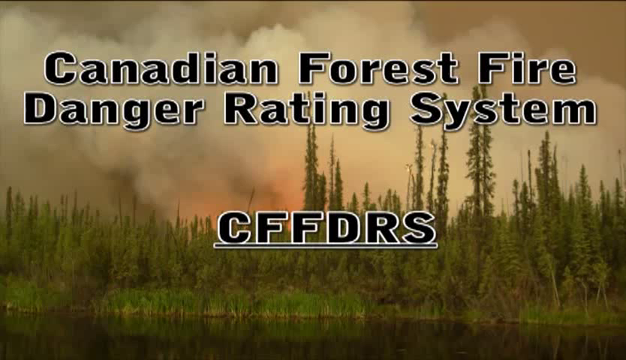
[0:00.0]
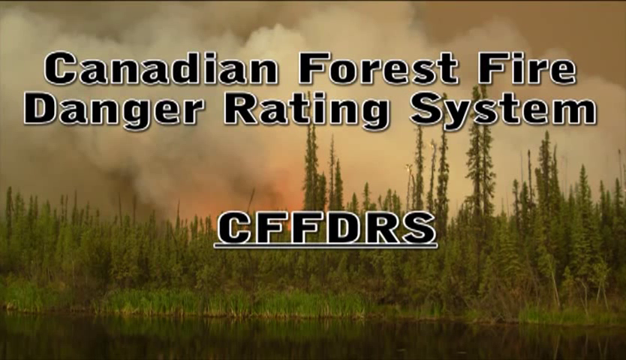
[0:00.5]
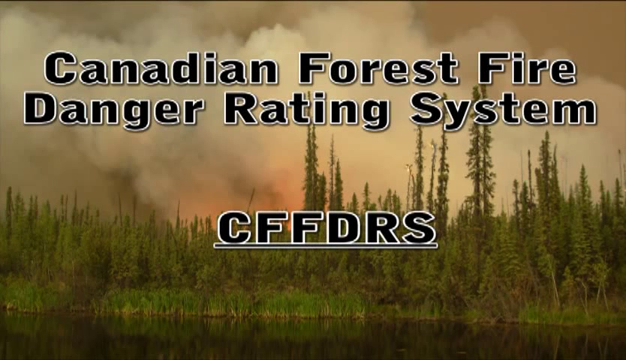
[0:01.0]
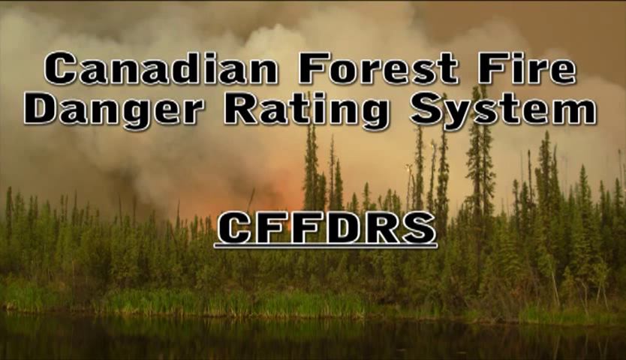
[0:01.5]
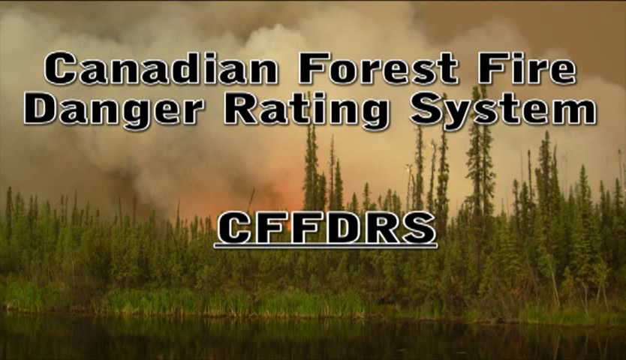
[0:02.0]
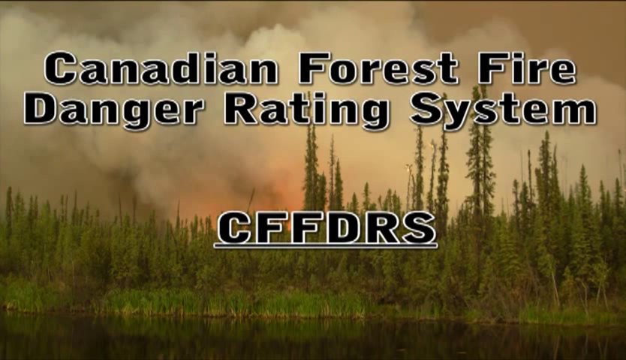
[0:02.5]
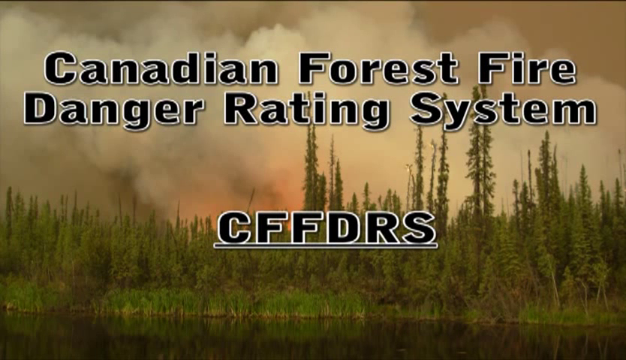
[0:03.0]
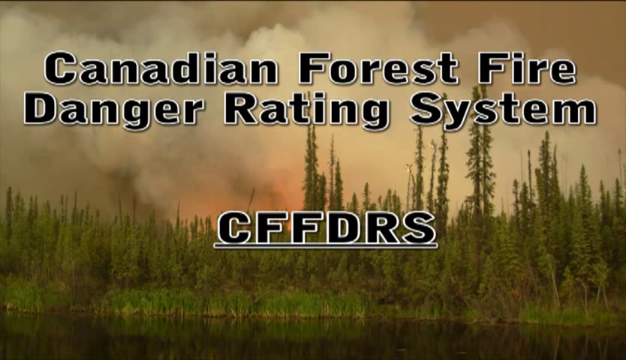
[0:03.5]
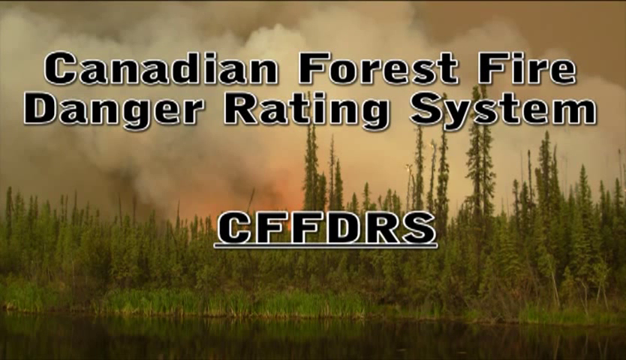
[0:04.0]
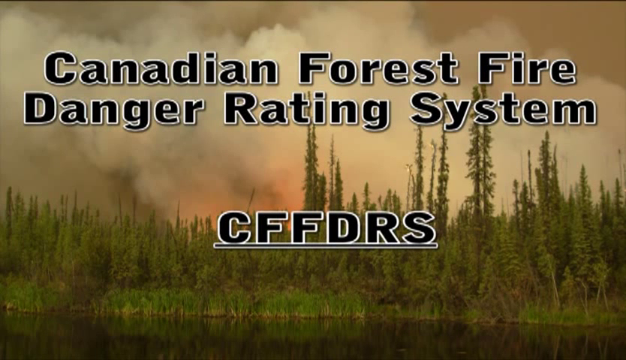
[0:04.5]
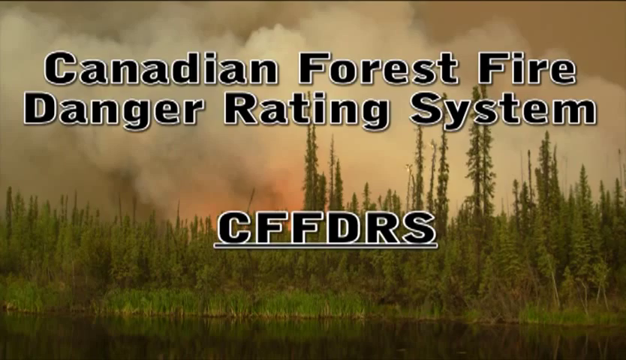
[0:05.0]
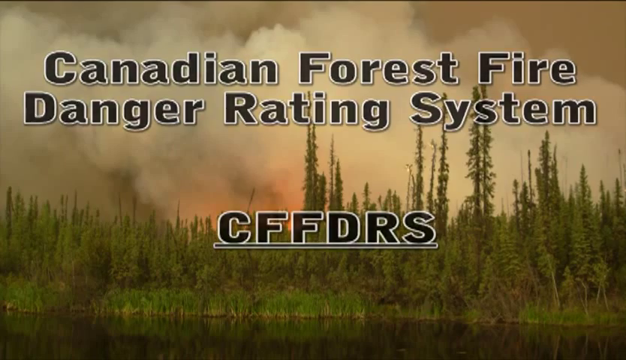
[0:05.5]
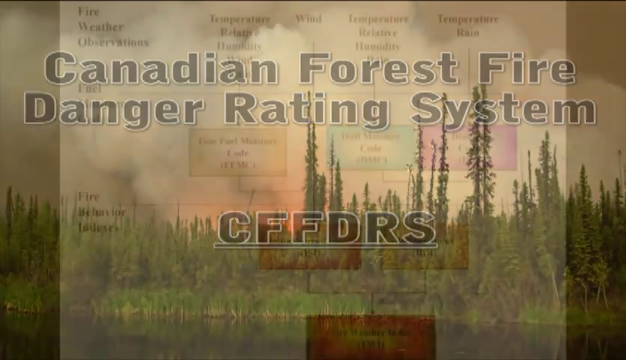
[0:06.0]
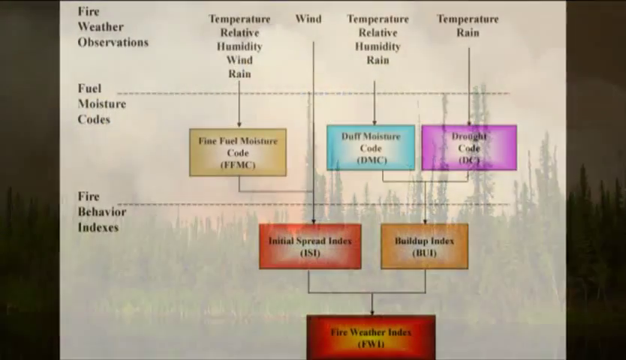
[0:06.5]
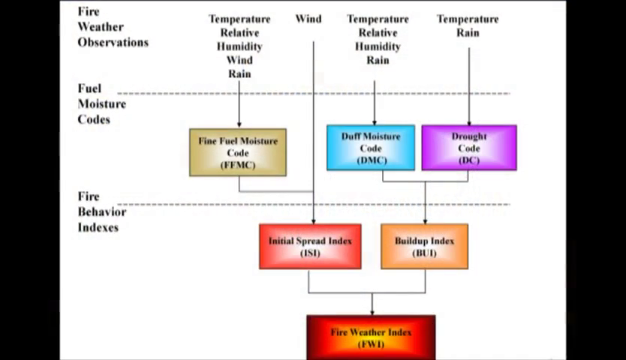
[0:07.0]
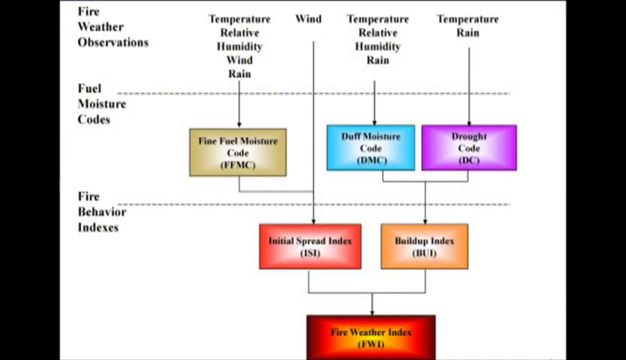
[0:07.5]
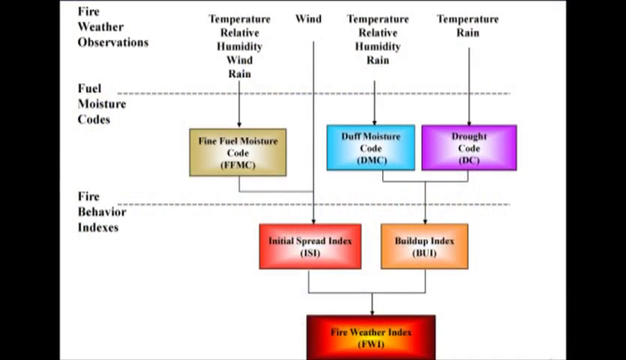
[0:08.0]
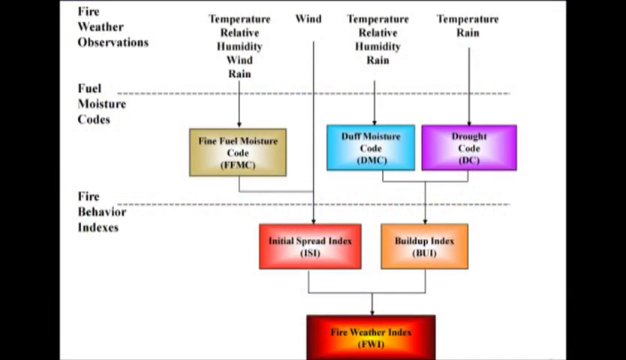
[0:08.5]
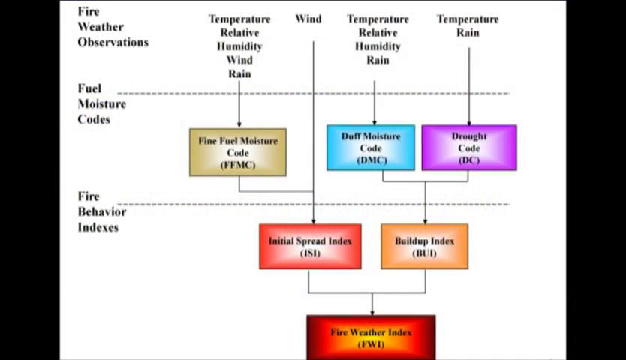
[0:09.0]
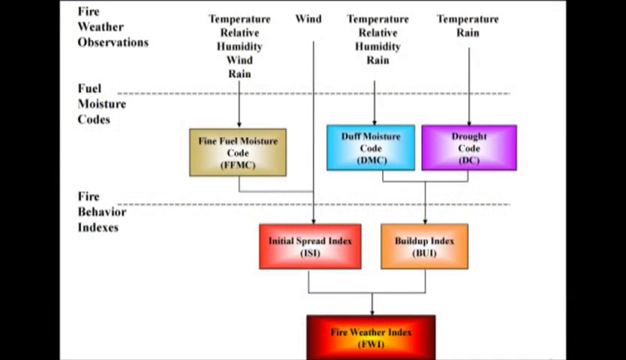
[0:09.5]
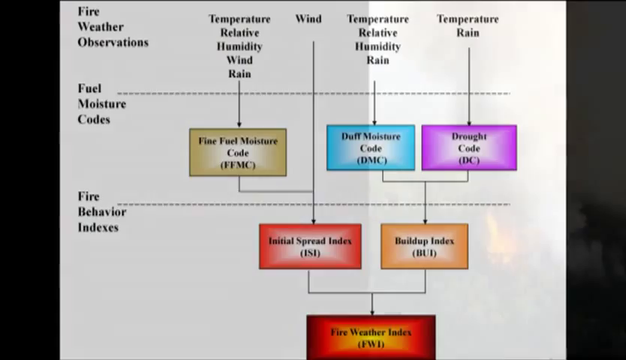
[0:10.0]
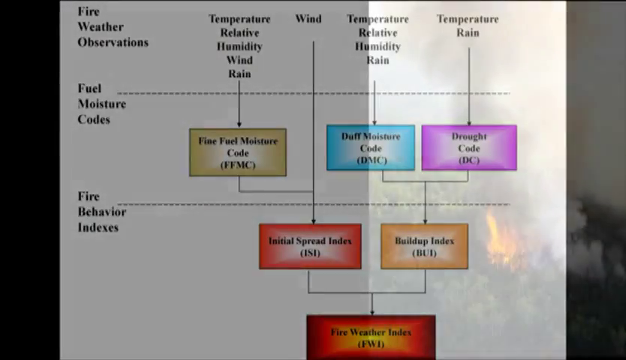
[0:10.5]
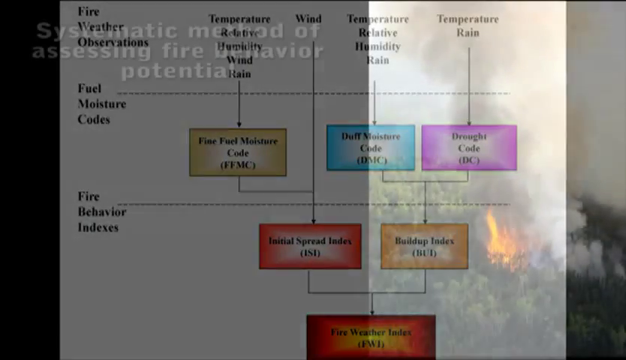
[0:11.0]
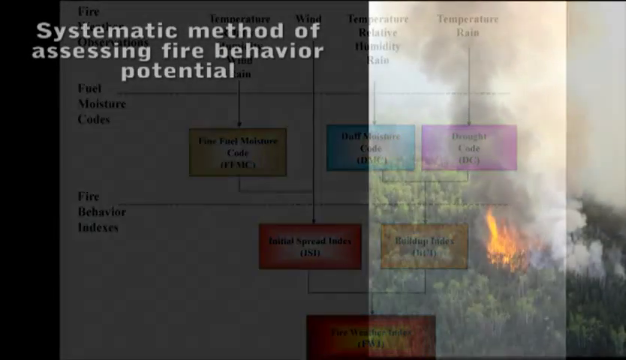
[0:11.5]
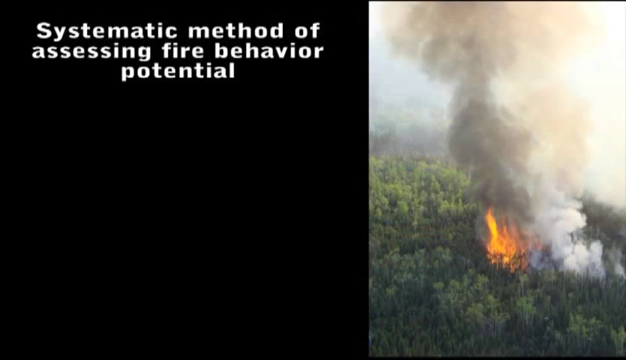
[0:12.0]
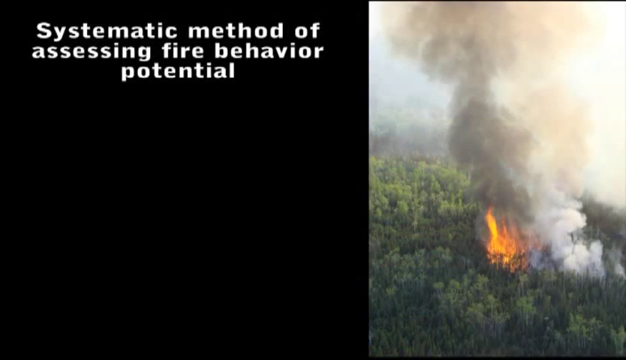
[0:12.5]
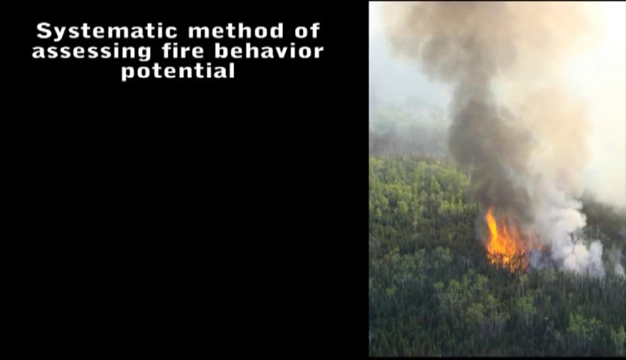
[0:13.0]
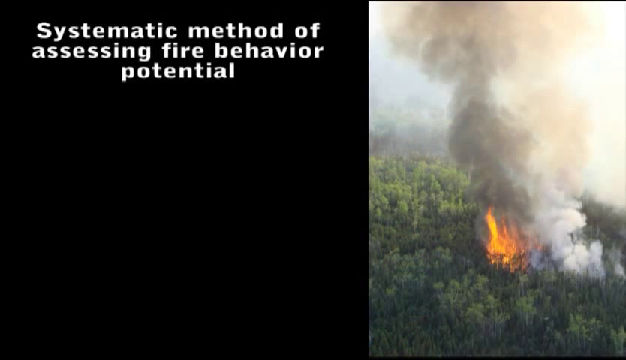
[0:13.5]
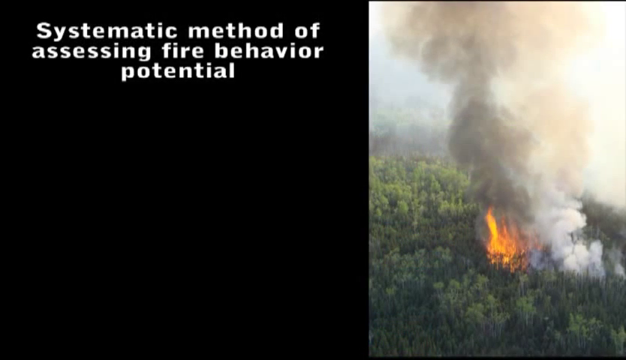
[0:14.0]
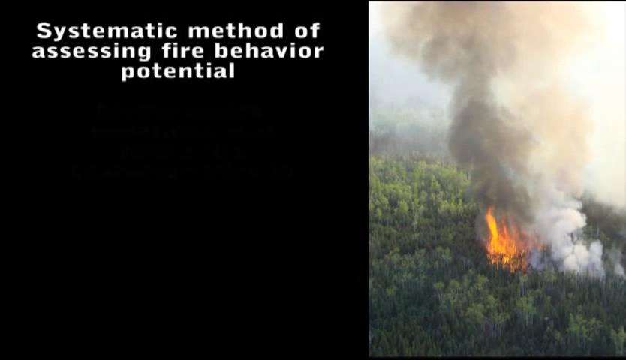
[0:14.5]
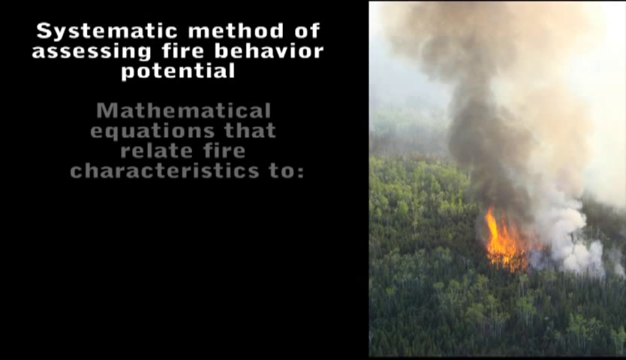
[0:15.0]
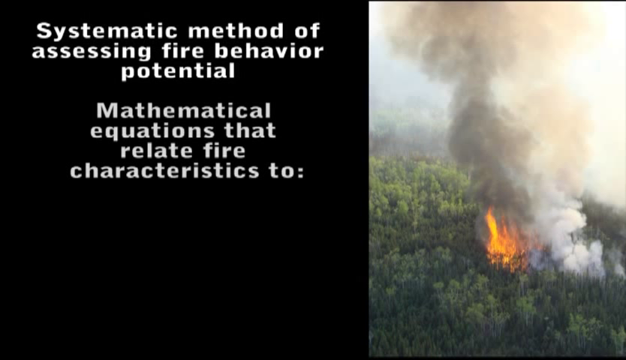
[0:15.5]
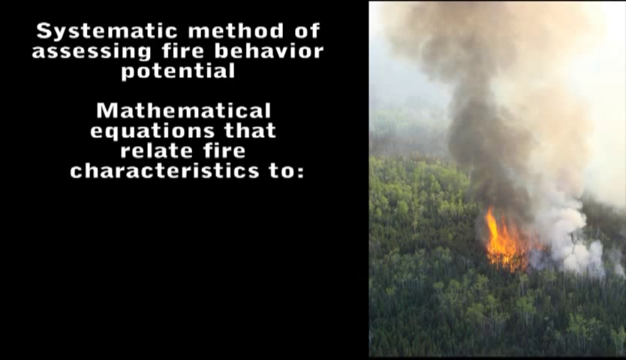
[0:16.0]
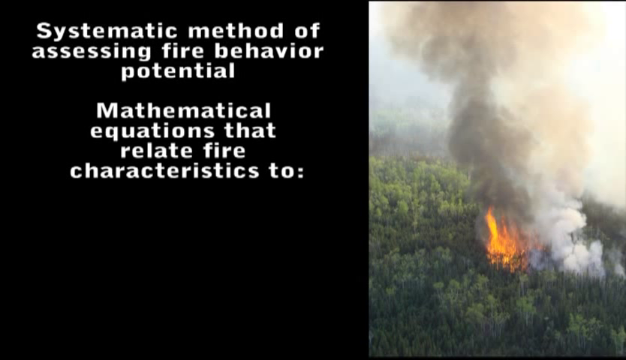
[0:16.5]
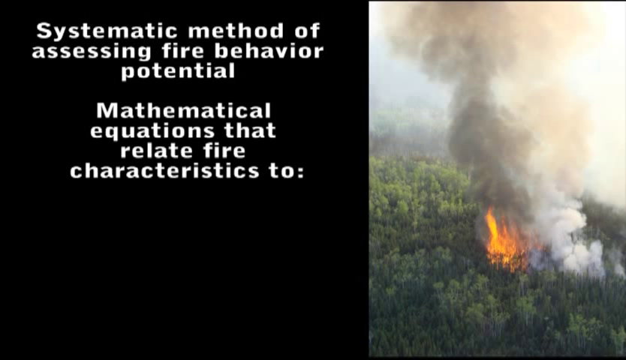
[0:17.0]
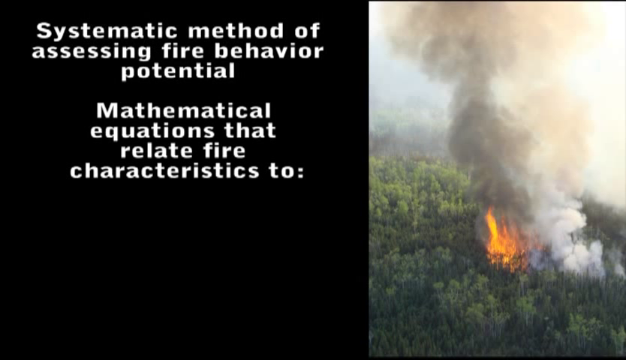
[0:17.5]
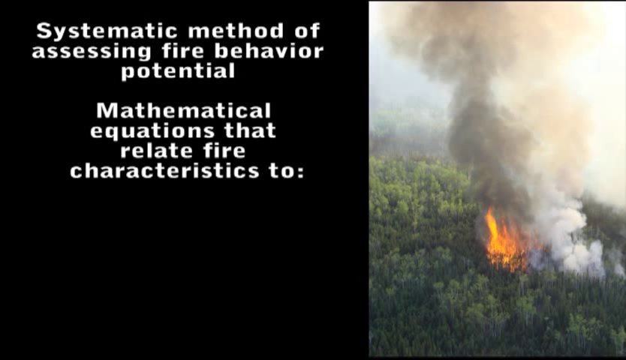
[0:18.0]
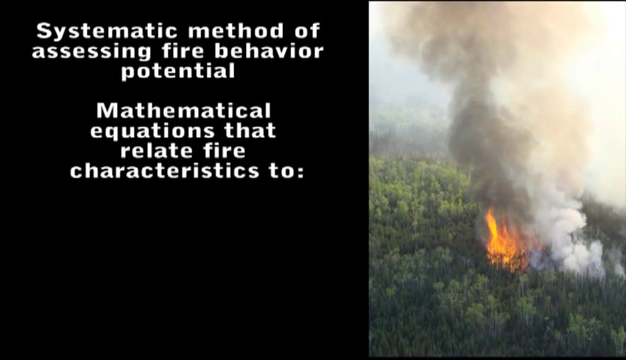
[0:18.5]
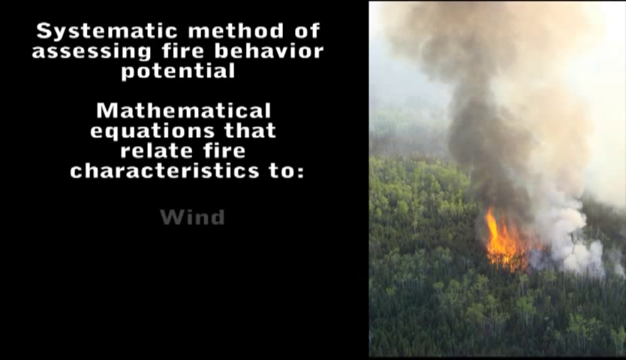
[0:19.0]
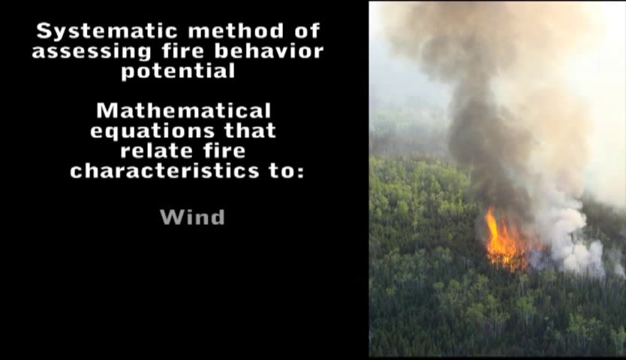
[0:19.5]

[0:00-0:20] The video opens on a picture with a body of water in the foreground. Trees are in the background, and behind the trees a lot of smoke rises into the air. In the very center, a brightness behind the clouds indicates a fire. Large black letters with white outlines on the screen read "Canadian Forest Fire Danger Rating System," with "CFFDRS" underneath. The scene changes to a chart. Reading left to right across the top: "fire weather observations," then "temperature, relative humidity, wind and rain," then "wind, temperature, relative humidity and rain," and then "temperature and rain." Lower down is "fuel moisture codes," and beneath that, on the left, a beige box reads "Fine Fuel Moisture Code (FFMC)."